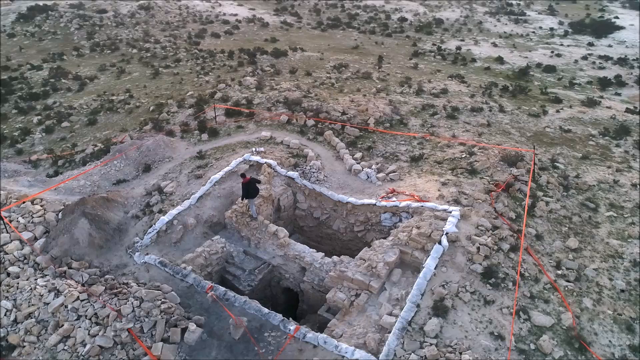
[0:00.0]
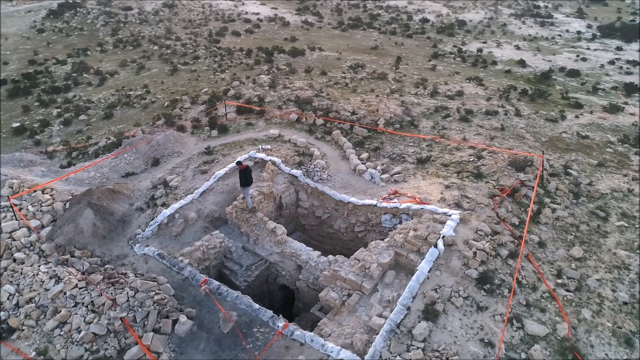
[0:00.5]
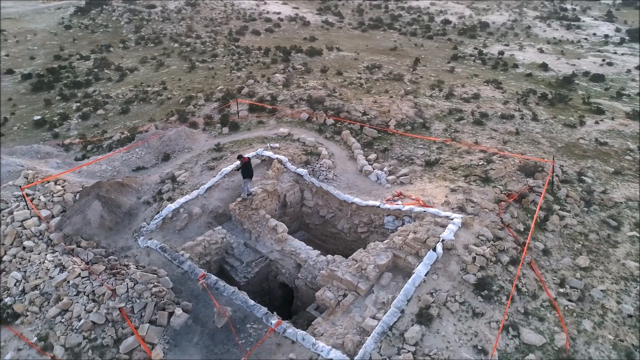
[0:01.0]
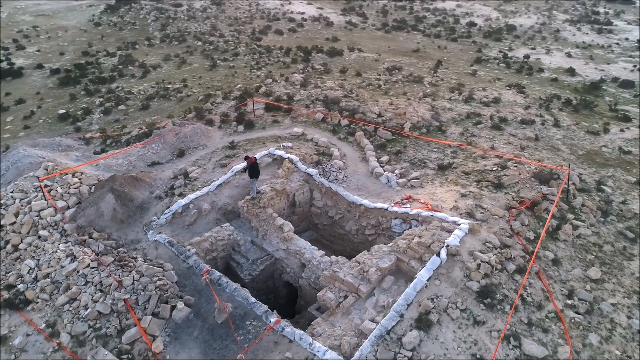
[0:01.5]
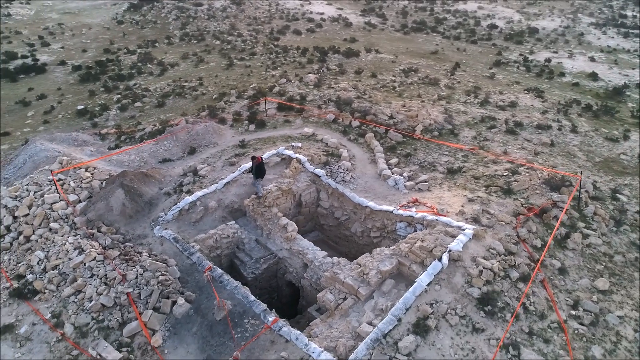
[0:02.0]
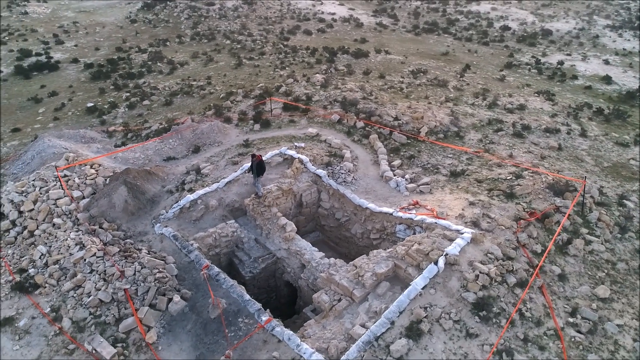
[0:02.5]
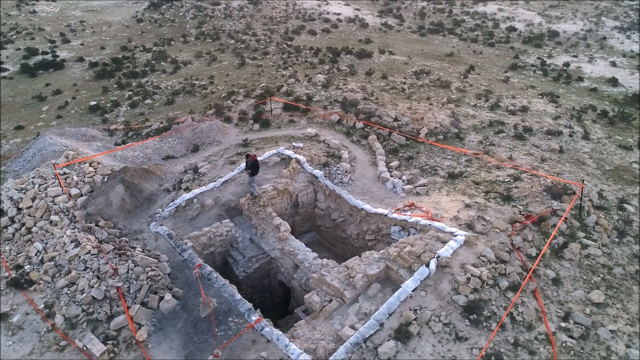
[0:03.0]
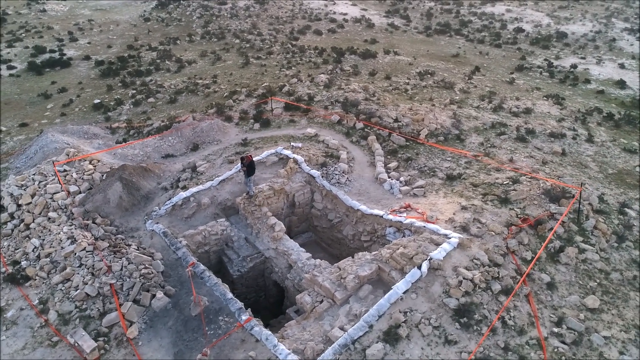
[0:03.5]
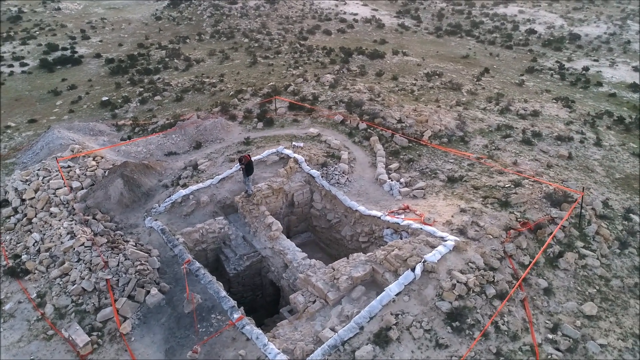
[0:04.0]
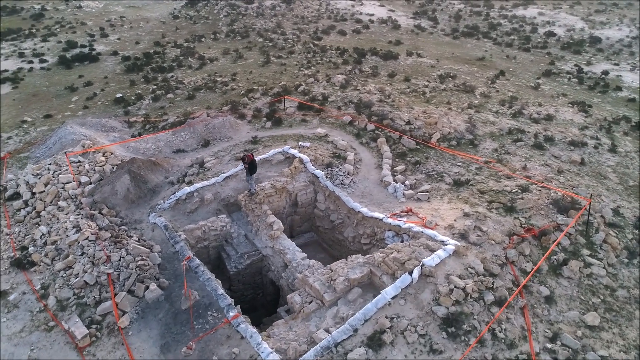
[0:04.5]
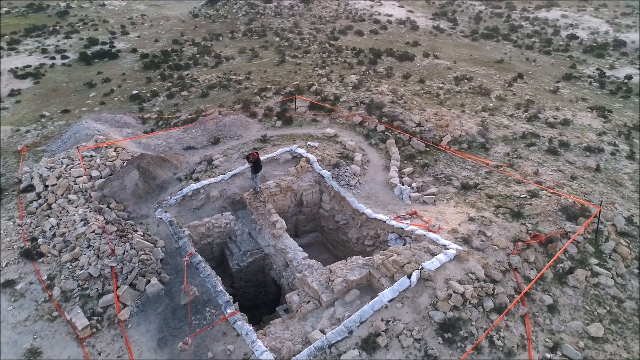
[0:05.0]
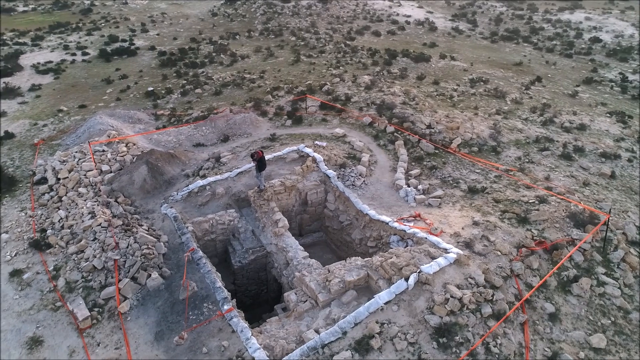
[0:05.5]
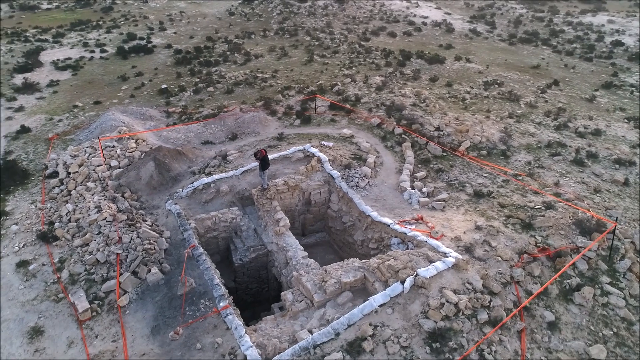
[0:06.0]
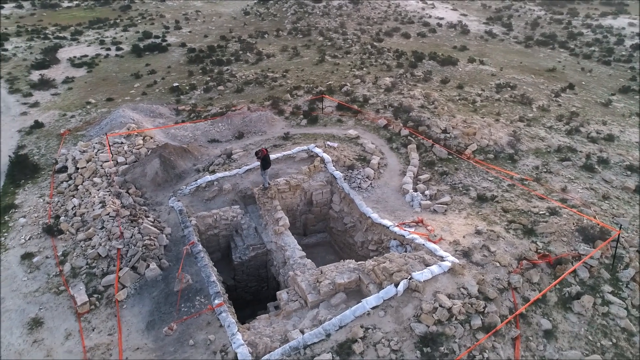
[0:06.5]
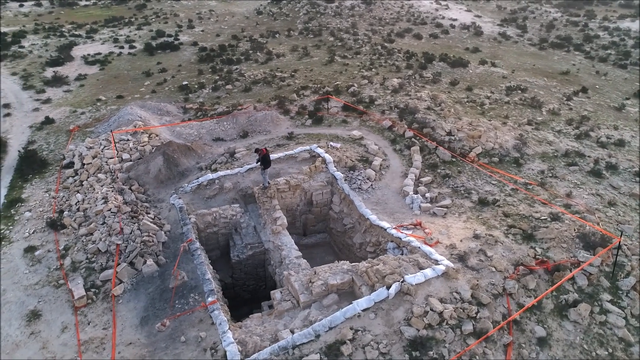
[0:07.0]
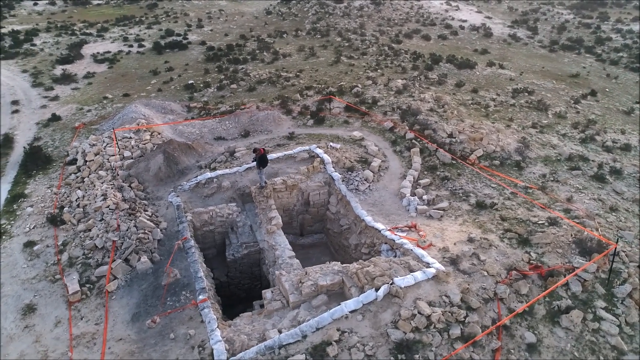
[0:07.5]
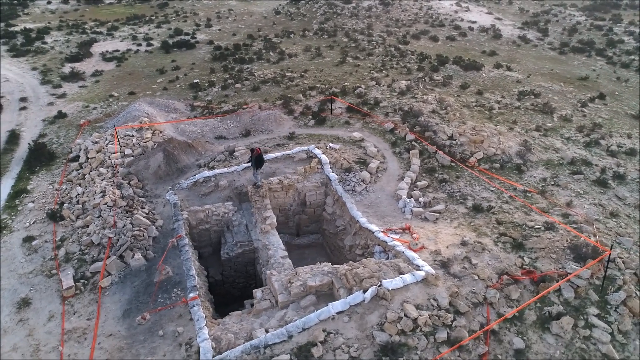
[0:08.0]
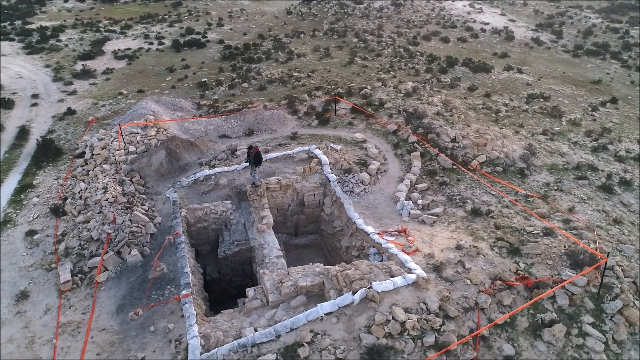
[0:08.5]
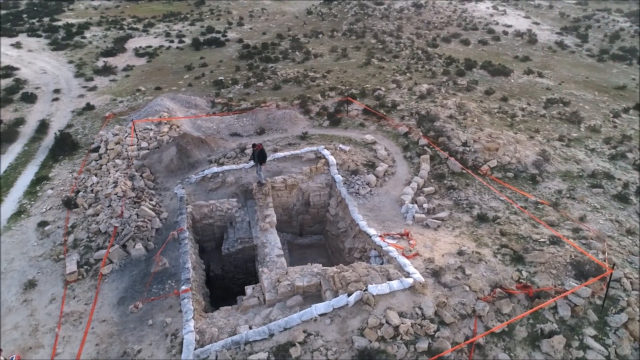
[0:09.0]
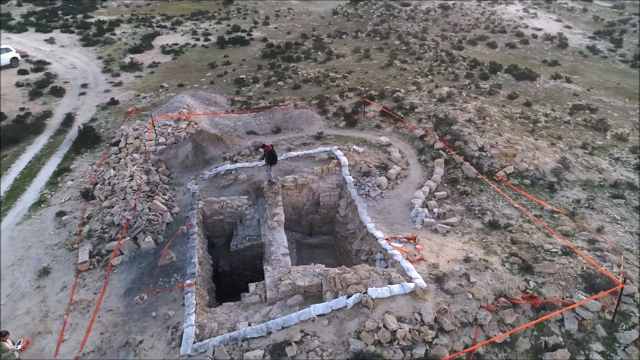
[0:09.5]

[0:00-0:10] A panning, moving shot shows a man at an excavation site. He seems to be in a dangerous position, exploring a dug-up cave-like area. The site is sectioned off around its perimeter by orange rope string, and he is in the middle of it by himself, standing on top and balancing, trying not to fall in. It could have been a tomb or some type of burial site; it looks like it was excavated. On each side there are very deep holes, maybe 12 or 15 feet down, and on the outside there seem to be sandbags. The man appears to be trying to be careful while recording himself somehow, maybe with a drone. The setting is like a desert brush flatland, possibly in a valley or on top of one. He wears a black hoodie and gray sweatpants and walks back and forth, kind of balancing. He is probably in his late 20s or early 30s.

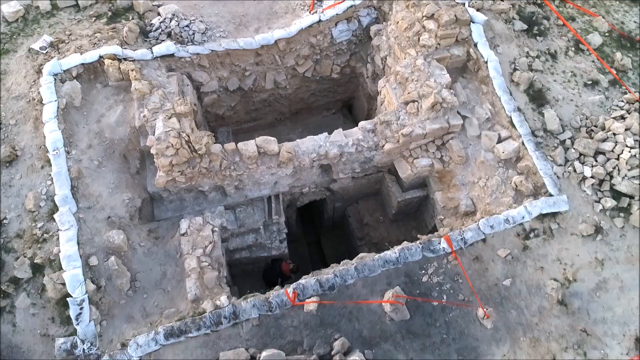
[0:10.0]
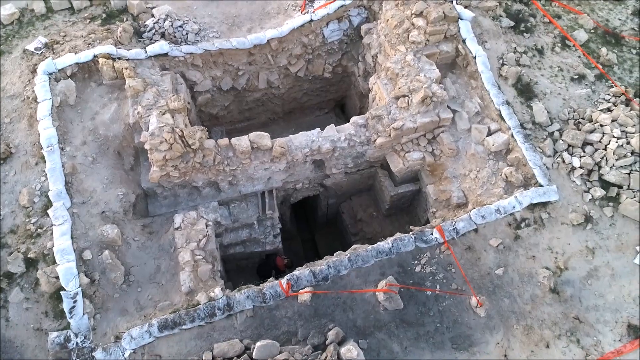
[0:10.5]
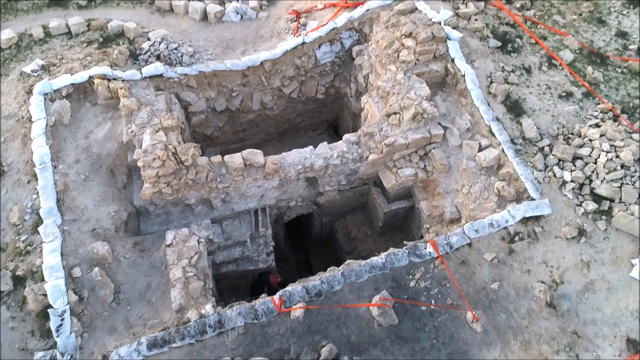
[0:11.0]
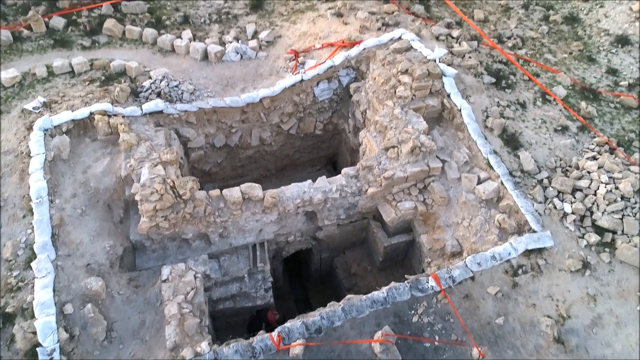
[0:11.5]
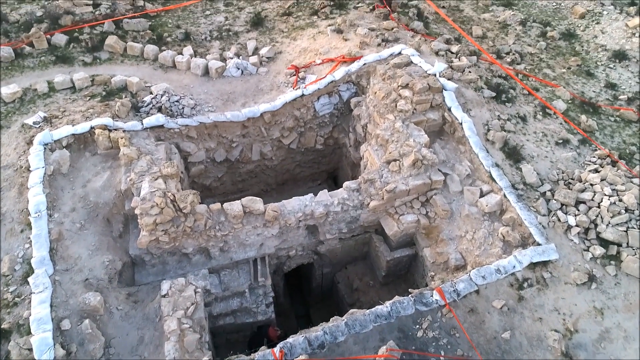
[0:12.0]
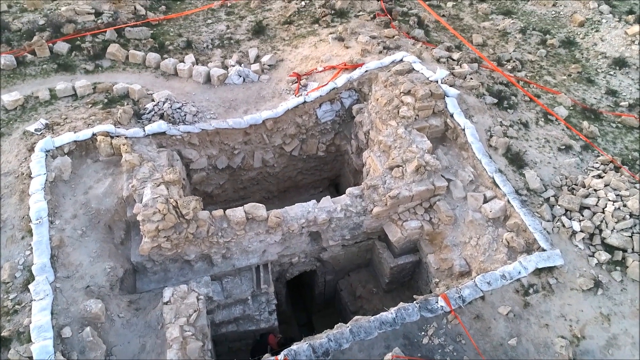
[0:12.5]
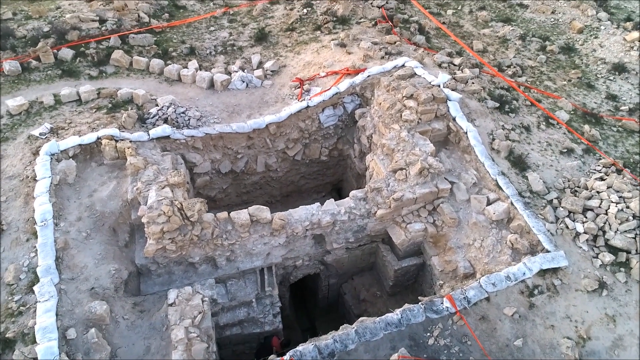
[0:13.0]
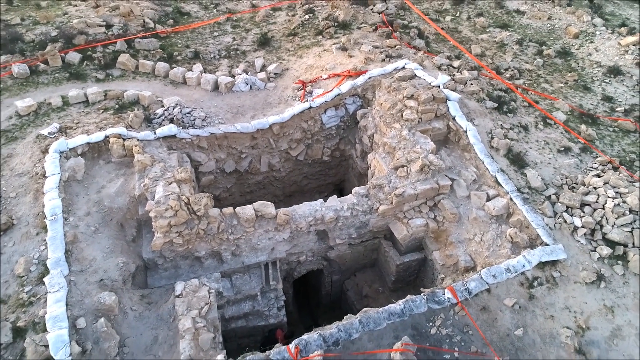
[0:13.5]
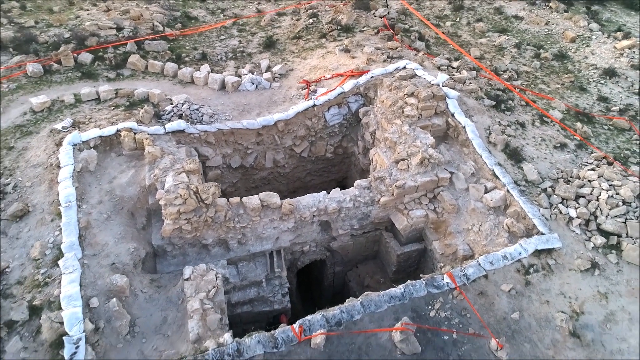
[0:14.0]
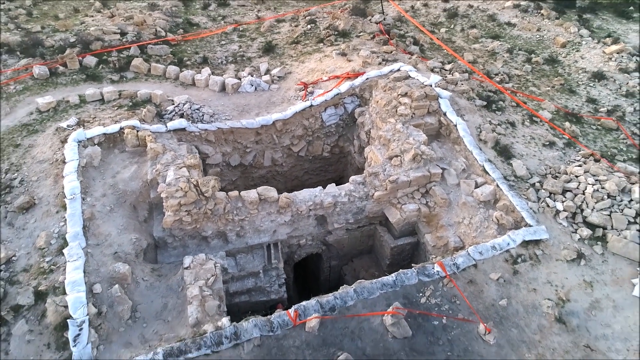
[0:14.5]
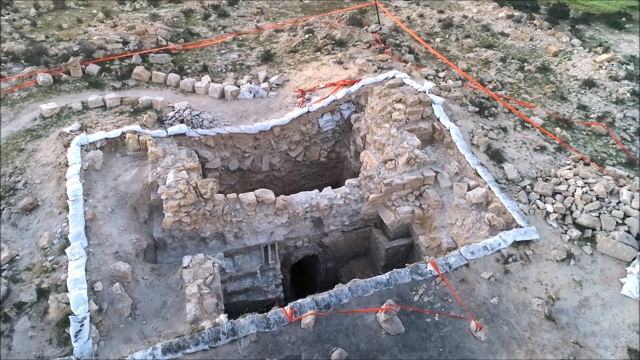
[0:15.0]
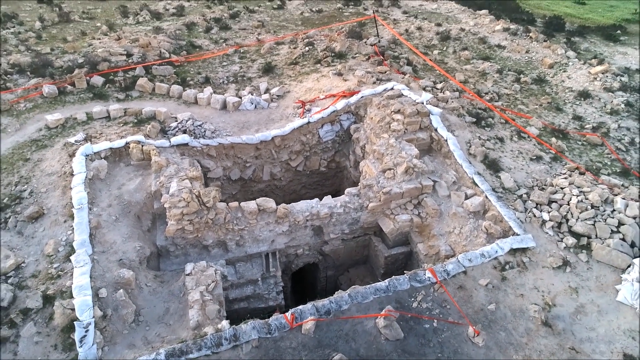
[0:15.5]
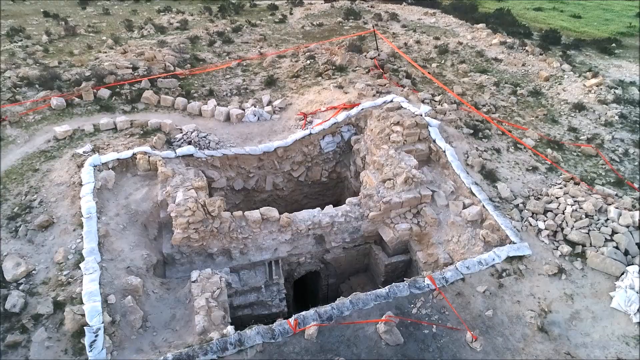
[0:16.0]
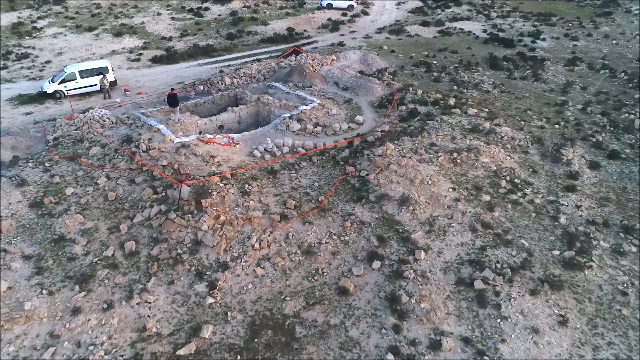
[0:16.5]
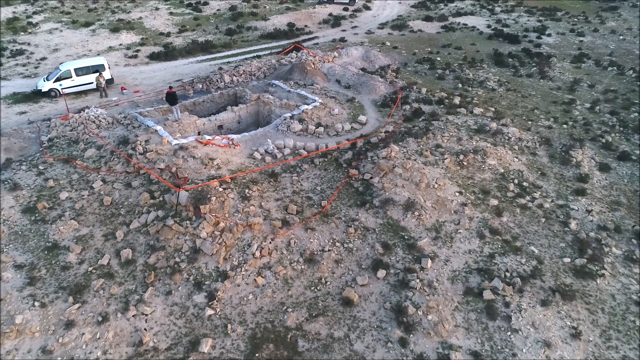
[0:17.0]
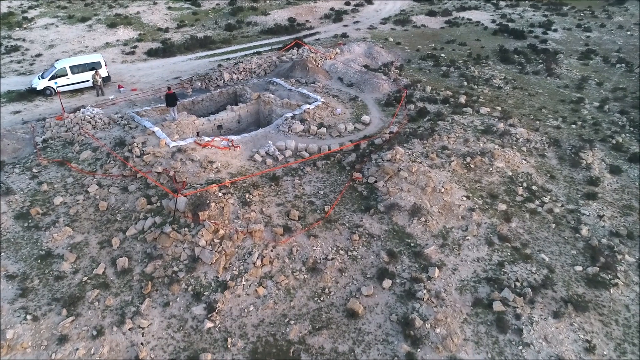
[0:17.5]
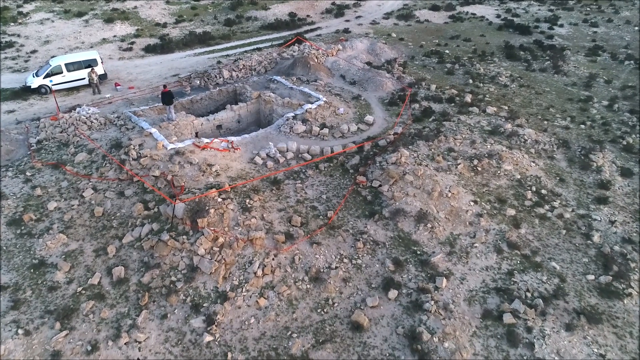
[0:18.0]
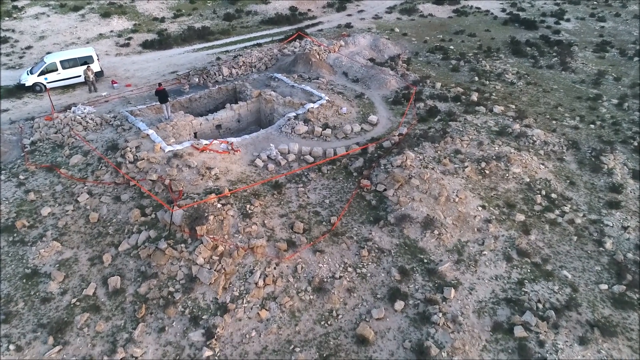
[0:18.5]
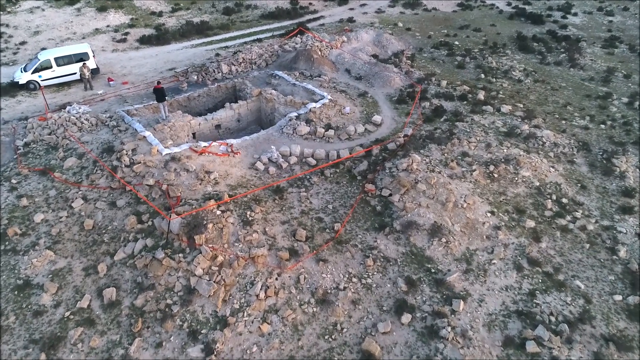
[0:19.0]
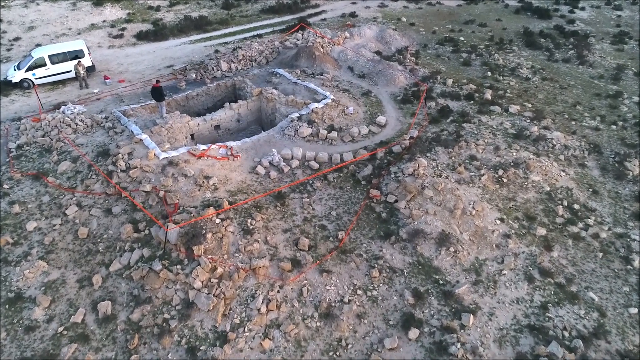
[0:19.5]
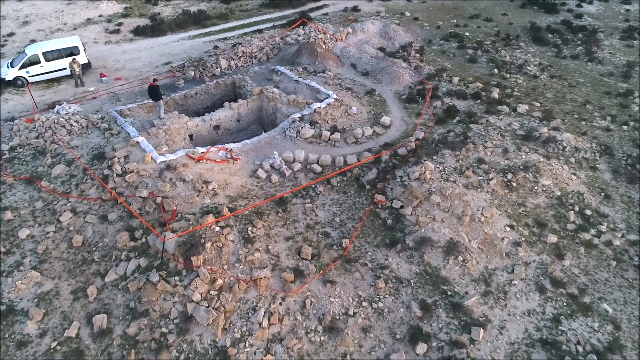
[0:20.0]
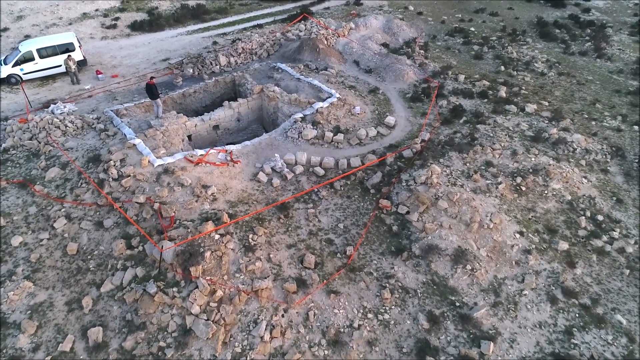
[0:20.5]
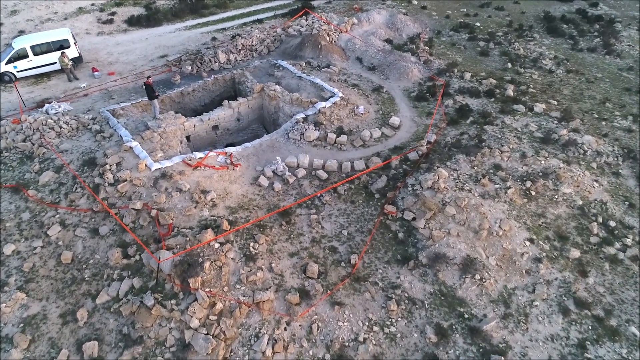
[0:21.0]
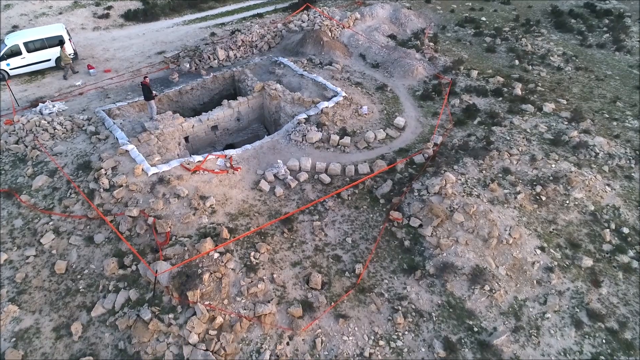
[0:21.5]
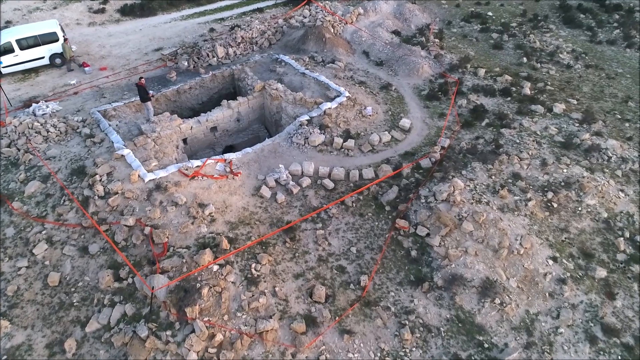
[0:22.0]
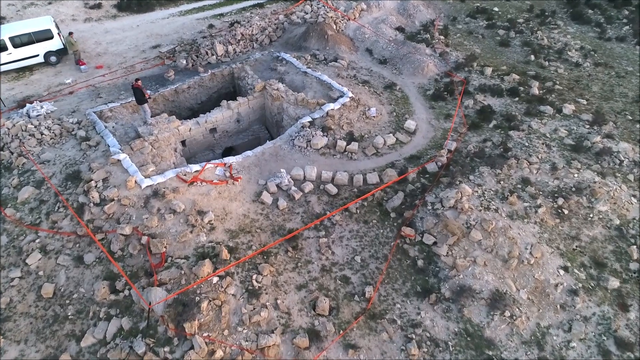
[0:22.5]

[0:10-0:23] Another shot shows a little tunnel or passageway connecting the left and right sides of the excavation. There is a white van and another man near him, maybe following or filming him. The site appears to have been left as an archaeological site. There is a landfill of heavy rocks that seem possibly man-built at one point, and from the different angles the ground has clearly been dug up. There are lots of tire tracks on the trail. The man is observing, surveying and exploring the site.